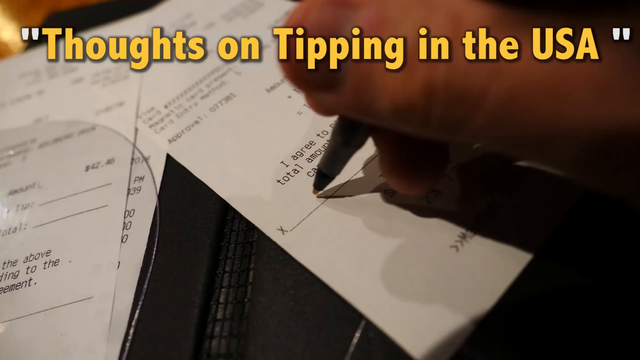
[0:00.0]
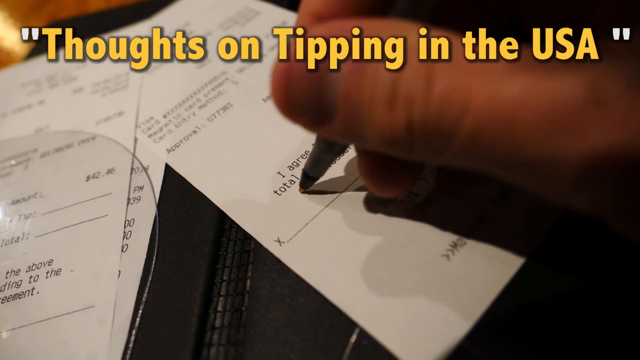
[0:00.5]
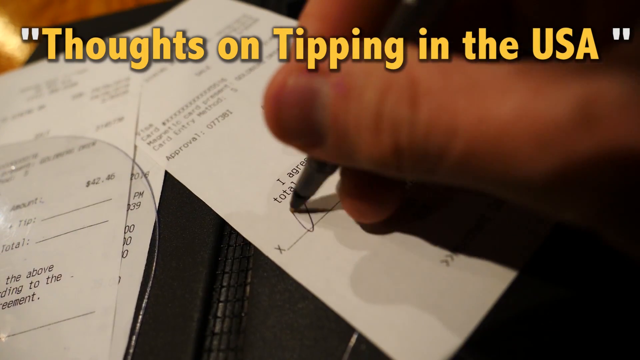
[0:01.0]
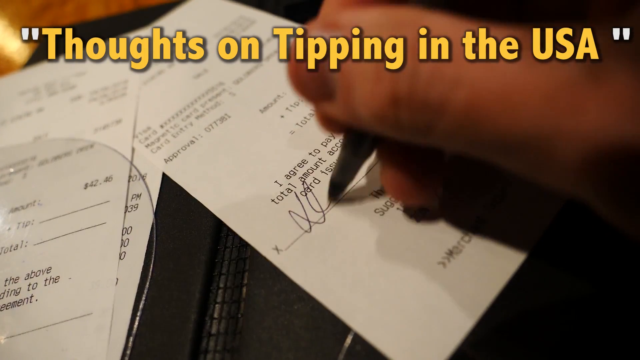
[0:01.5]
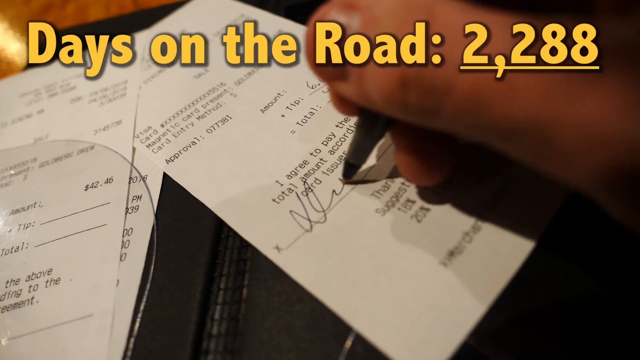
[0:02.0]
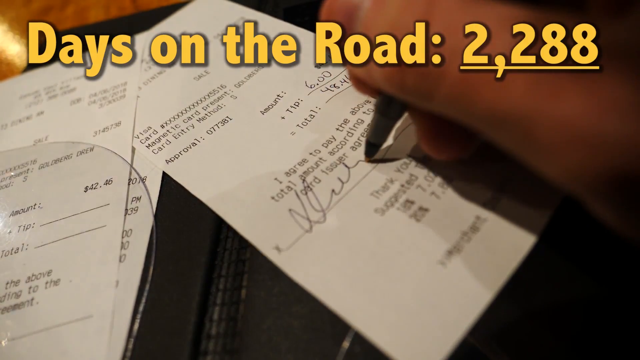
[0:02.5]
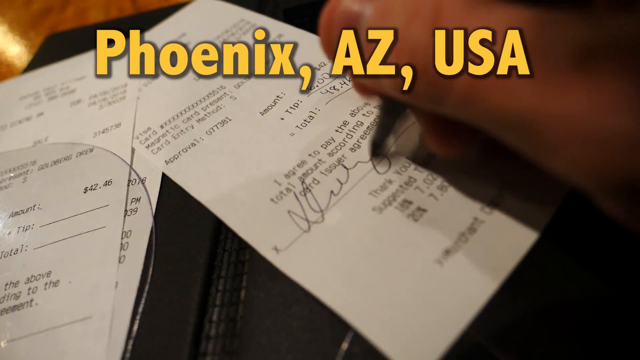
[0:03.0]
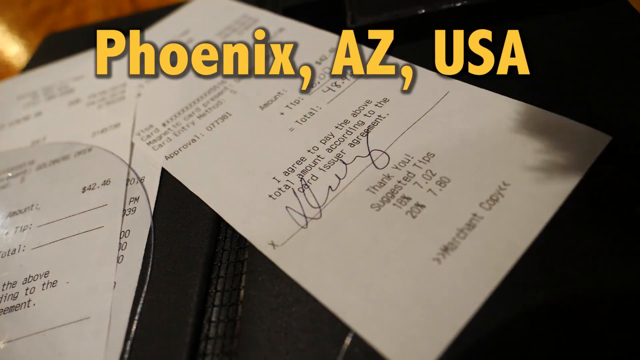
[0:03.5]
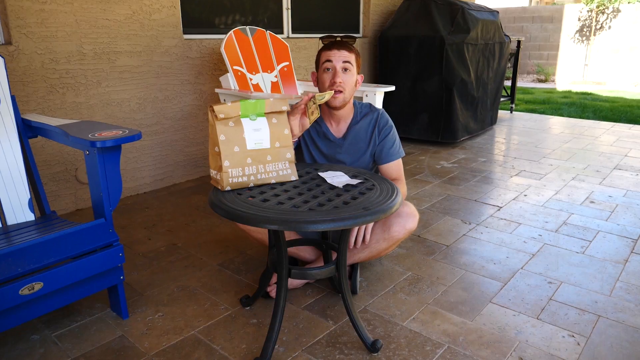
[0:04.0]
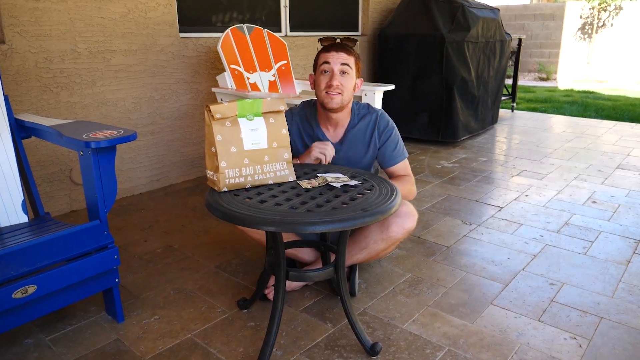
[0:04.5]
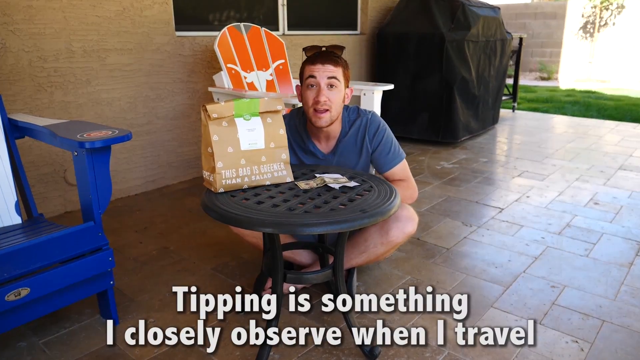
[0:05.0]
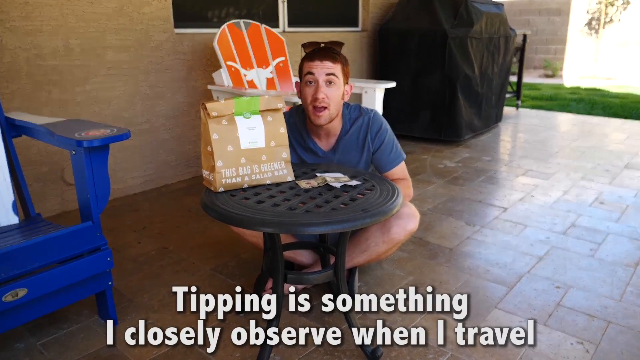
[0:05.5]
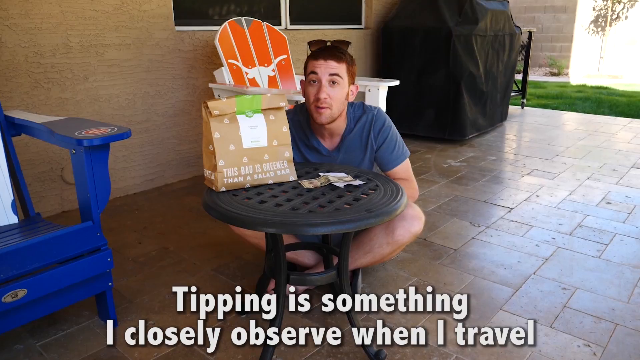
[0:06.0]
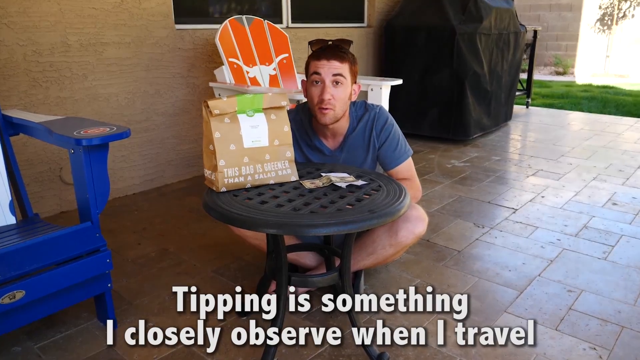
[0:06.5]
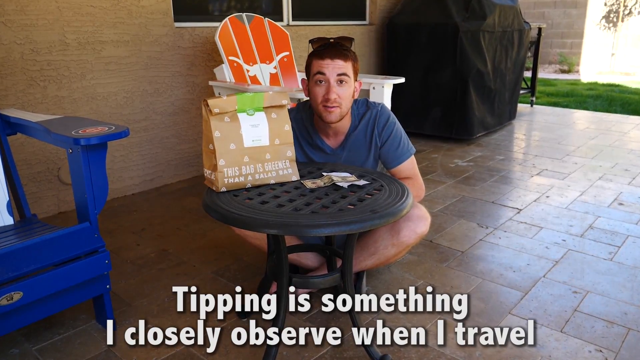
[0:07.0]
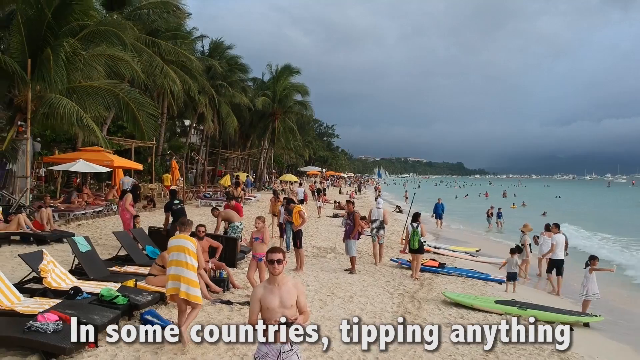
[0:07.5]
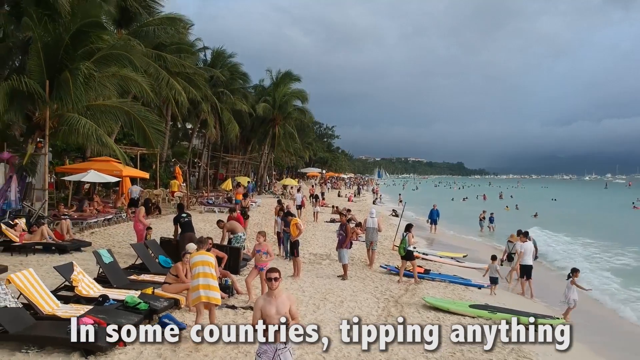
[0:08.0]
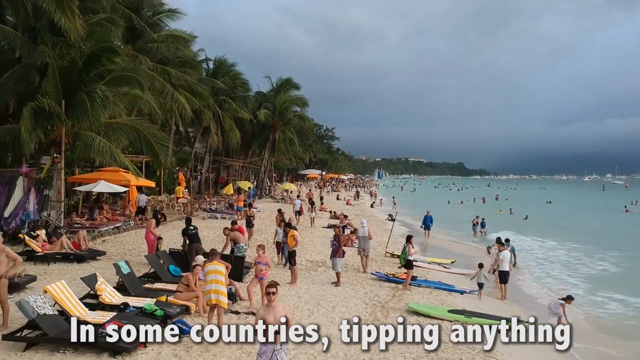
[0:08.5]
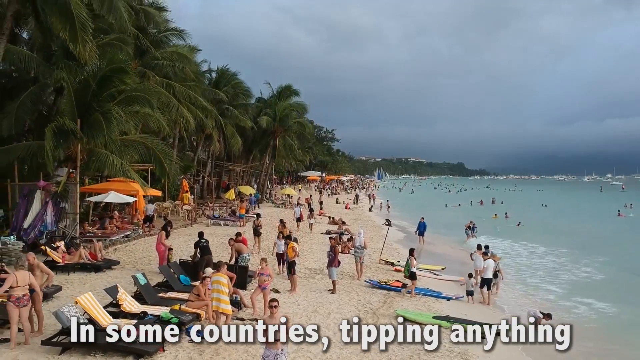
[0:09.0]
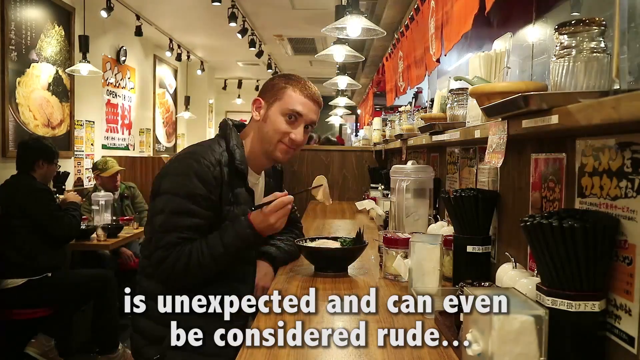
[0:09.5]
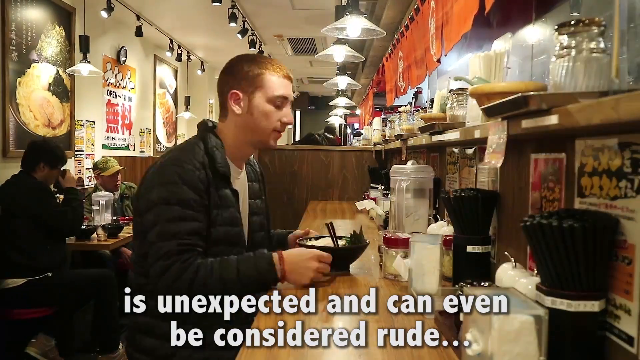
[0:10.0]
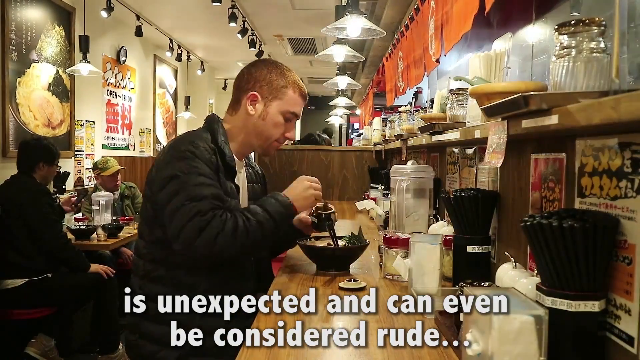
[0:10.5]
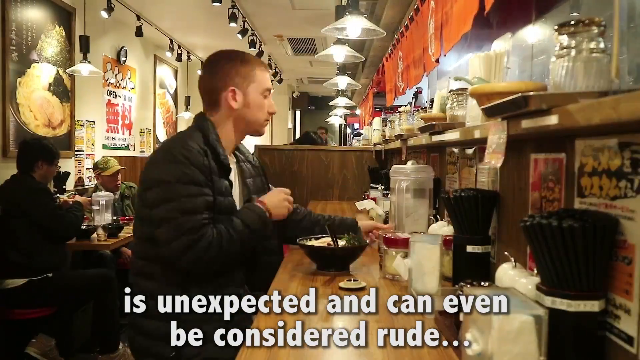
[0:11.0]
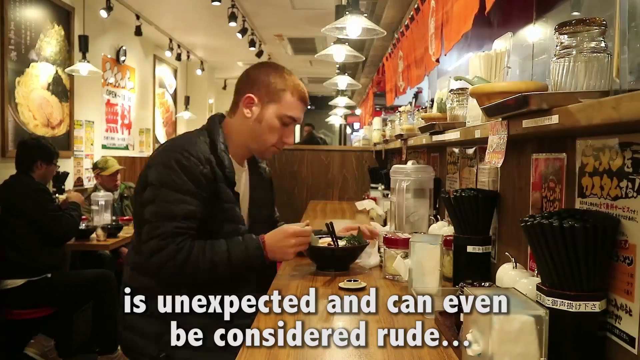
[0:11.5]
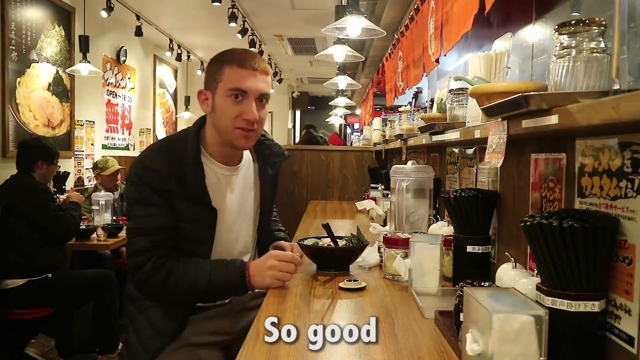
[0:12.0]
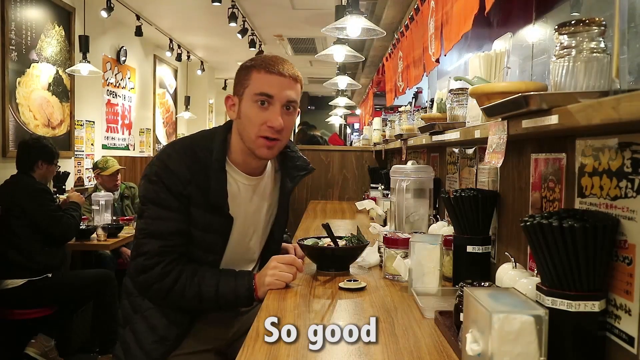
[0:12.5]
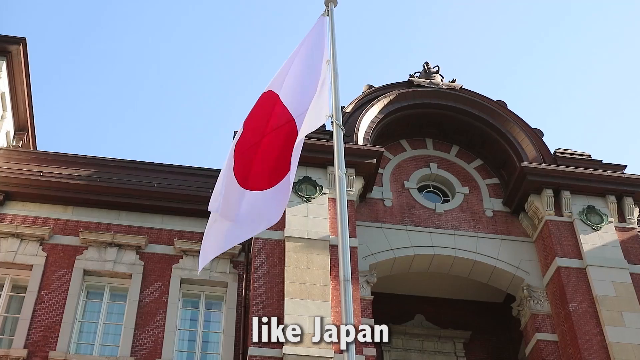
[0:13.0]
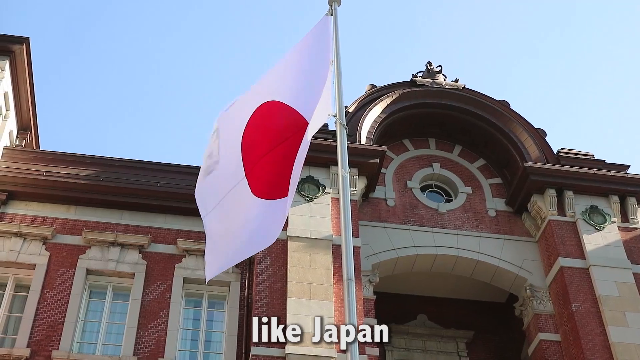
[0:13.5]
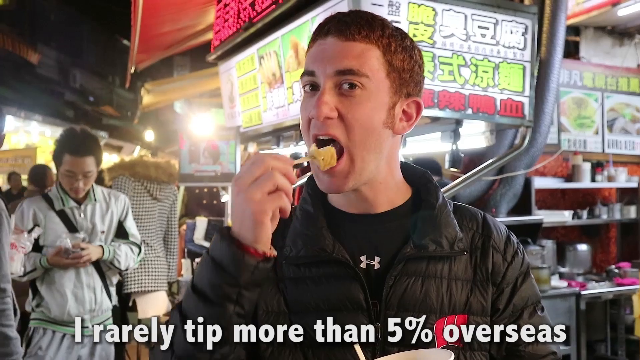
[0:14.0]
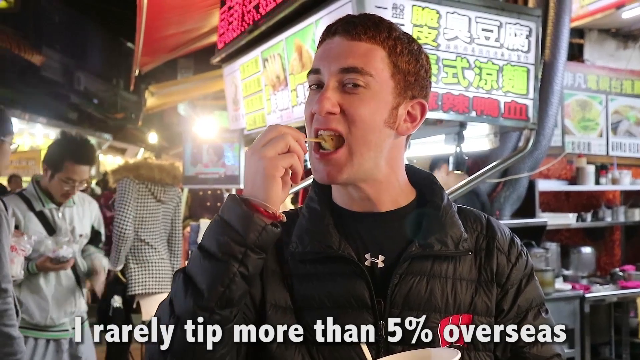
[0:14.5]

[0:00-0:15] The video seems to be a documentary or travel-like show about tipping, comparing the United States with other countries; tipping seems to be customary in the United States and not in other countries, and the show appears to illustrate these differences. A variety of scenes appear: a man, seemingly at a diner, eats, then a receipt comes up and he is shown paying, signing and showing a tip. He is also shown sitting on some sort of patio with his legs crossed in front of a table, talking to the camera. There is a picture of the man eating, then a zooming-out photo overlooking a beach from a distance with many people on it. The man is at a diner talking to people, and eats on the street from a bowl using what appear to be chopsticks. In the background a Japanese flag is flying, and some people in the dining area sit around casually dining. He appears to be in many different areas and countries.